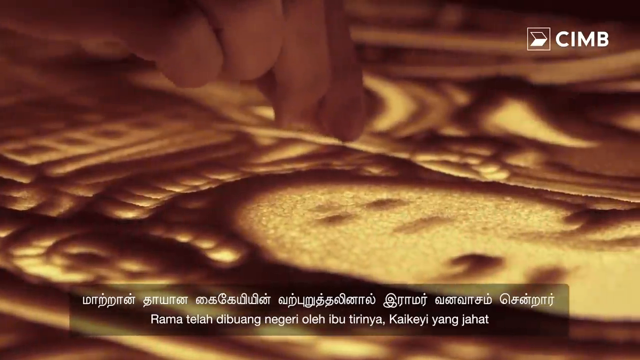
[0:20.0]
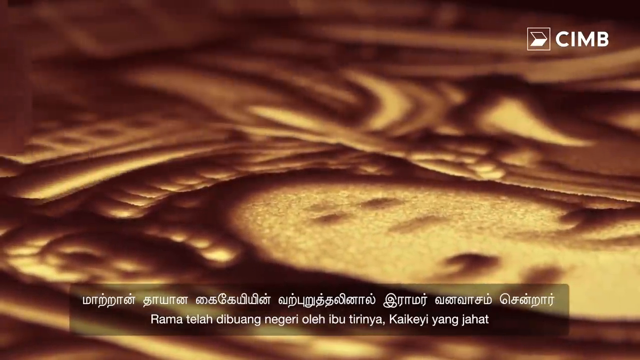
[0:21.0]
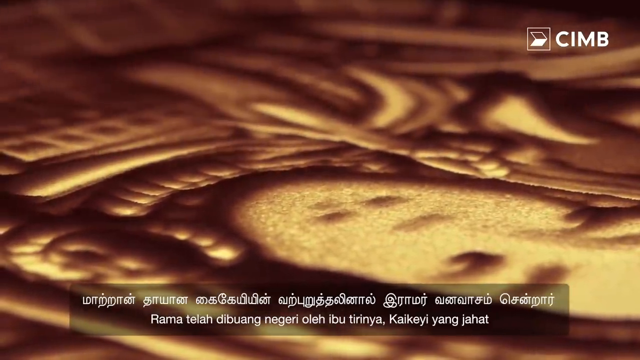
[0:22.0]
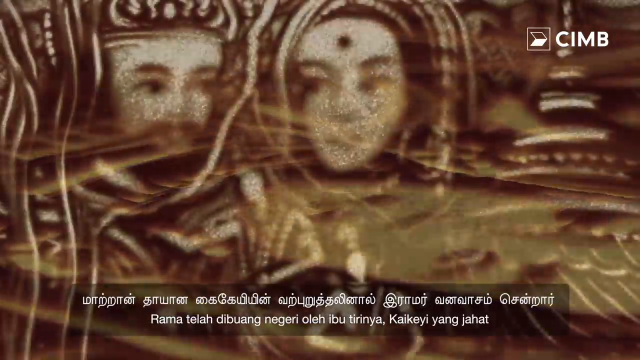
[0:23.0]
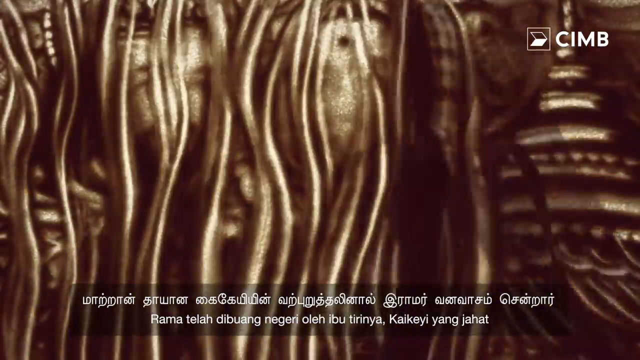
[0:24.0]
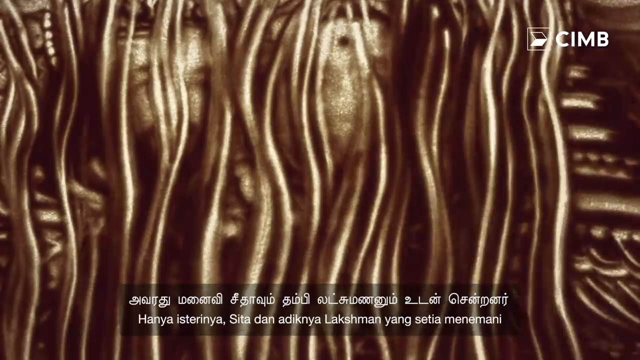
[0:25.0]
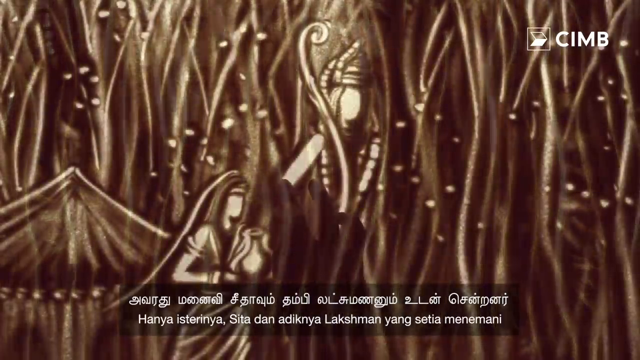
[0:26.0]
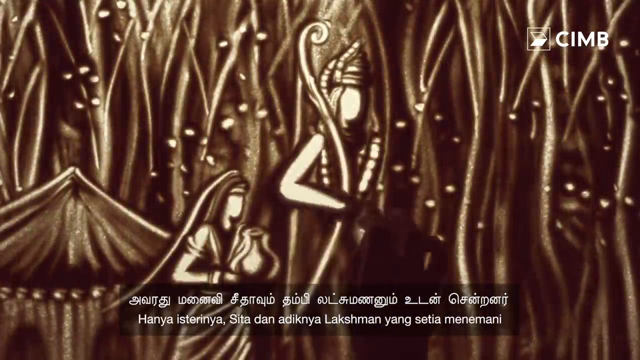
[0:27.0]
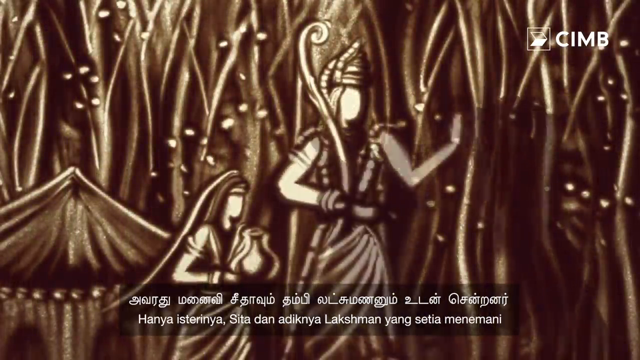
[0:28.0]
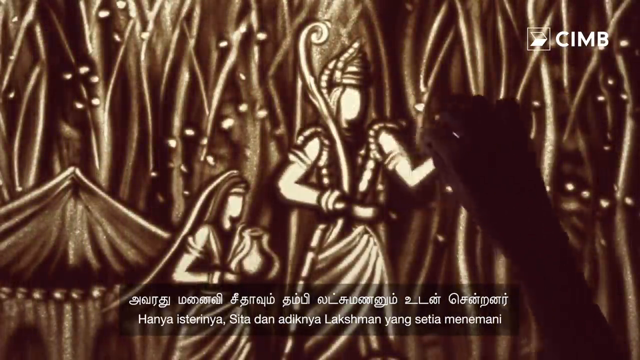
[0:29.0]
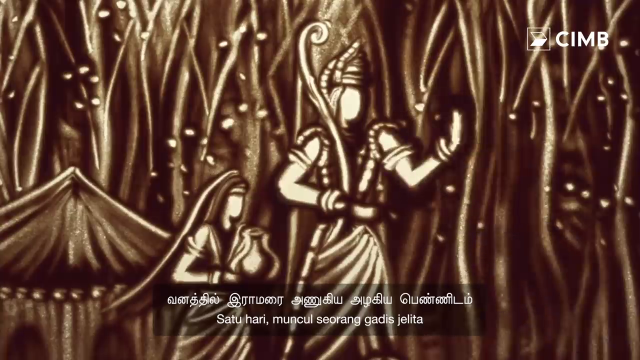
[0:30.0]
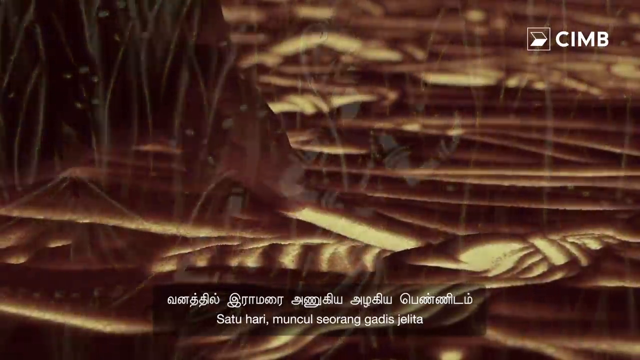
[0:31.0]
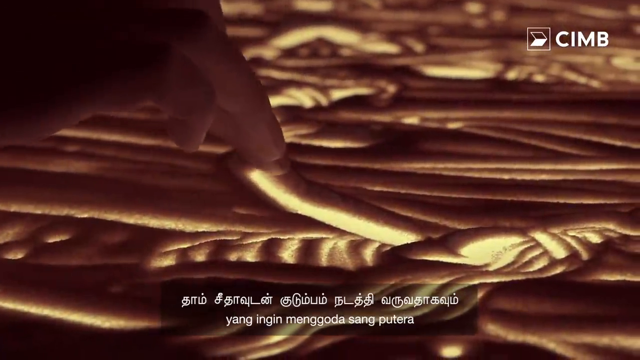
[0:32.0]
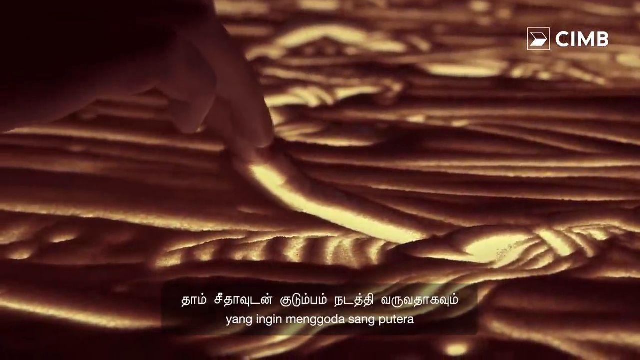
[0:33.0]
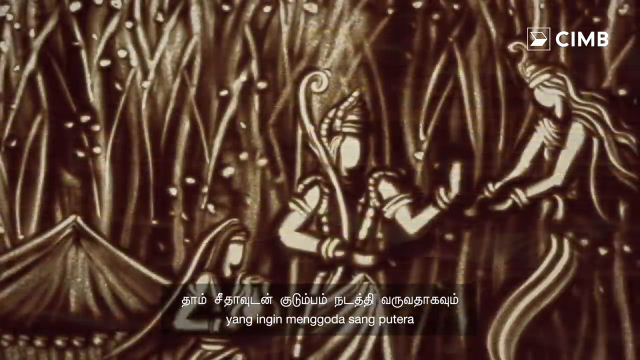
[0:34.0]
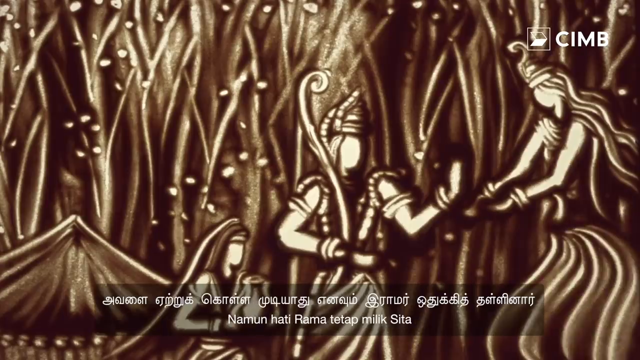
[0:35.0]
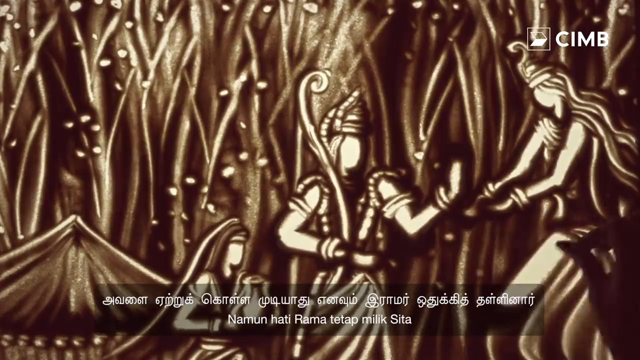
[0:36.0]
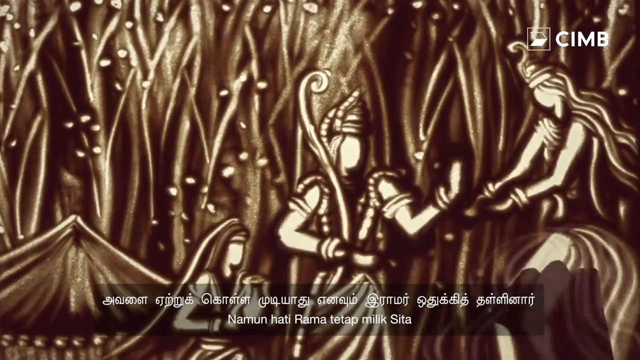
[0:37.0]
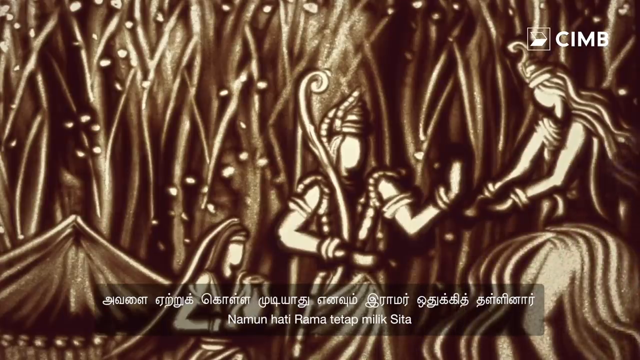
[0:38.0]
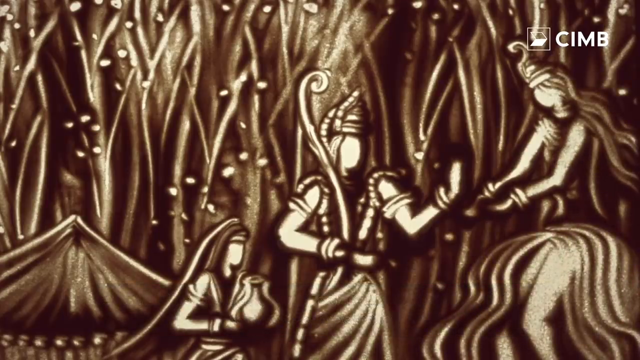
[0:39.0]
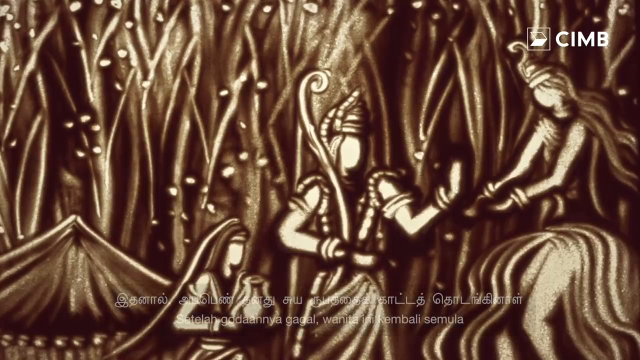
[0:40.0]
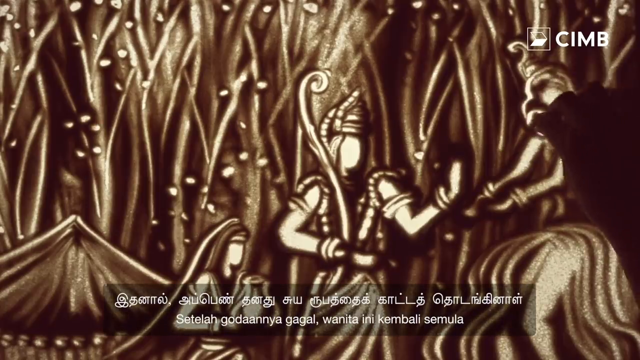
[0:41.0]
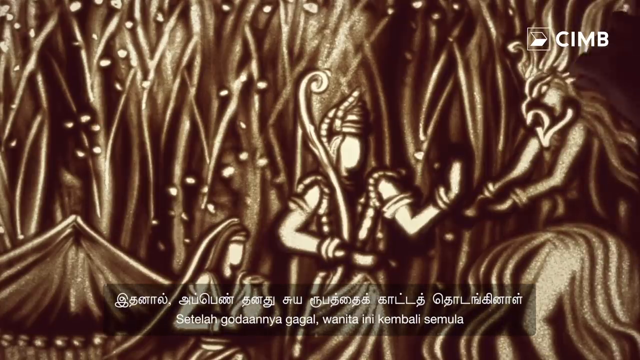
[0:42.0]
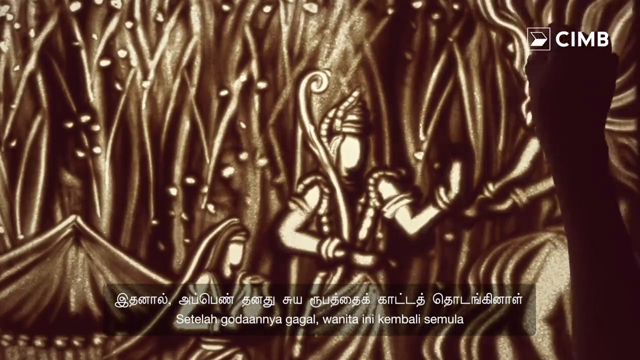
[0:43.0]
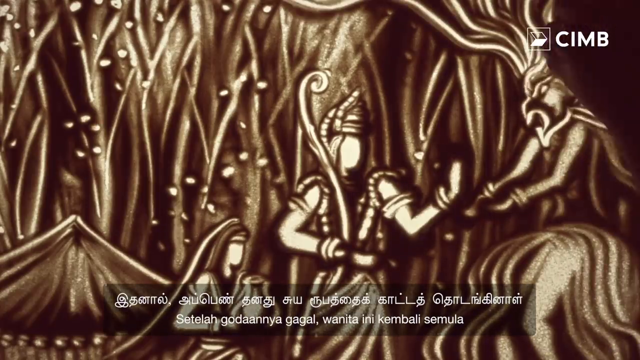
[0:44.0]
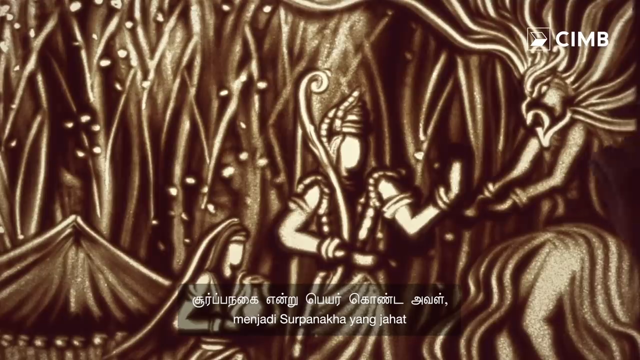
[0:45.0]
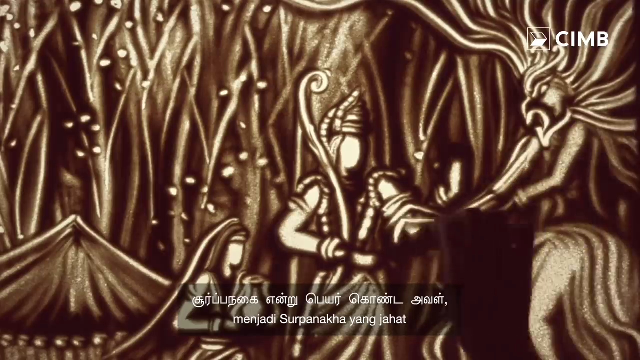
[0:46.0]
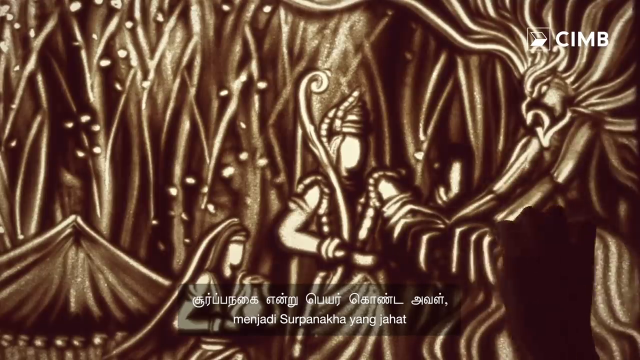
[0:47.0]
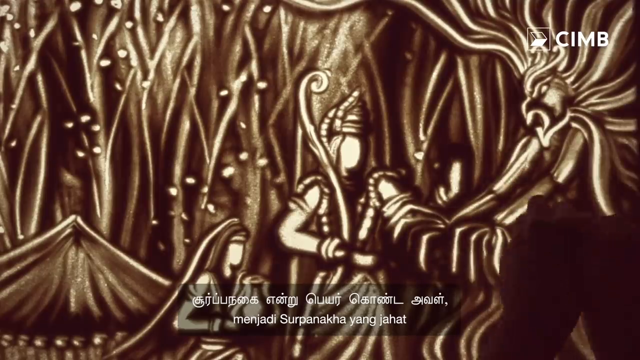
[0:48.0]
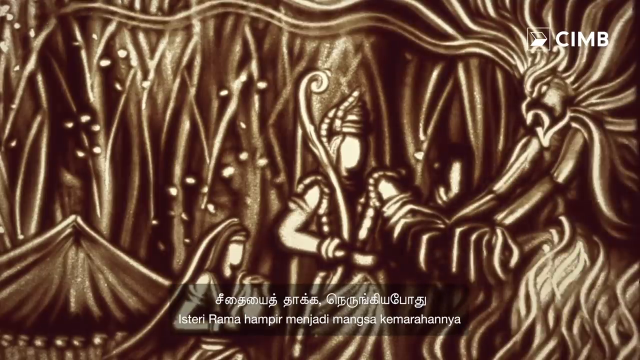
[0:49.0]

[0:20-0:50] Someone sprinkles sand on the artwork, which shows a woman's face. The artwork is a lighter sand-colored yellow with darker brown and black patches. In a shot of the artwork, a man and a woman are being covered by white, sandy, squiggly lines, and a shadowy hand does the covering. Fingers then push sand to create the limbs of a person, and the hands continue working to create a figure that looks like a woman. A zoomed-in shot shows someone's fingers moving sand on a table, followed by a full shot, in fast speed, of someone using their hands to create another figure of a woman. The woman turns into some type of lion as the person uses the sand to create a mane; it looks like the woman is wearing a lion's mask as the person repurposes the image. Fingers move sand throughout the scene to create different pieces of artwork.